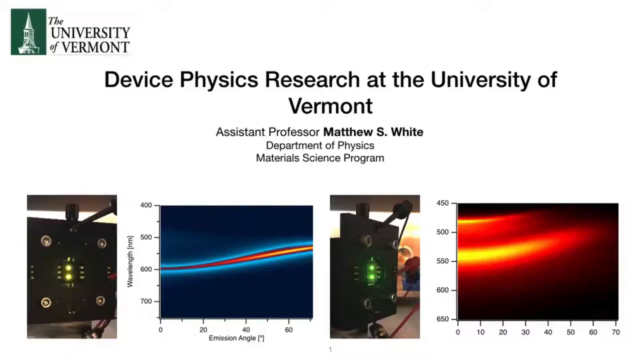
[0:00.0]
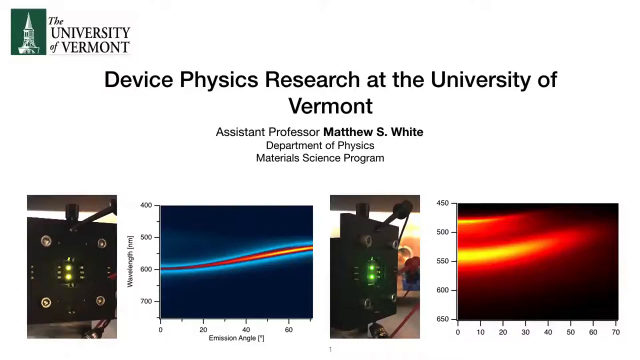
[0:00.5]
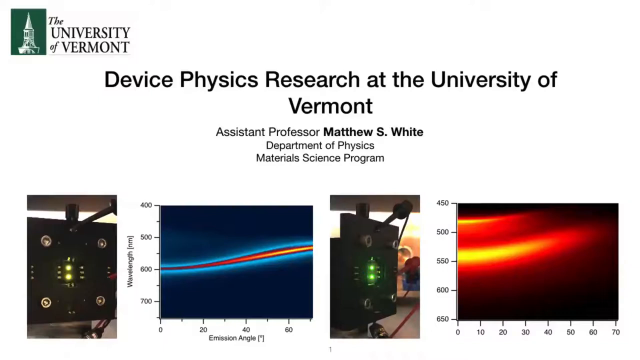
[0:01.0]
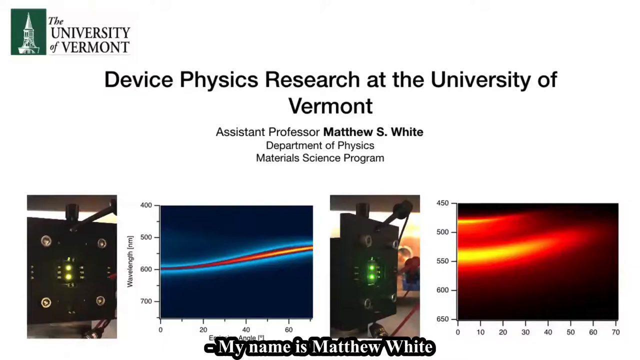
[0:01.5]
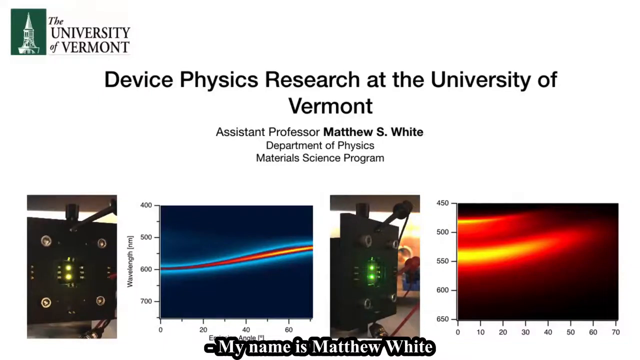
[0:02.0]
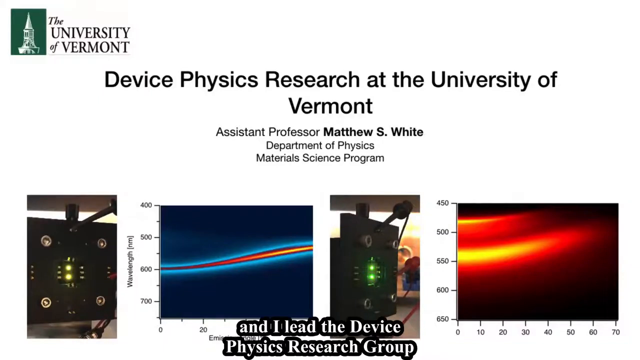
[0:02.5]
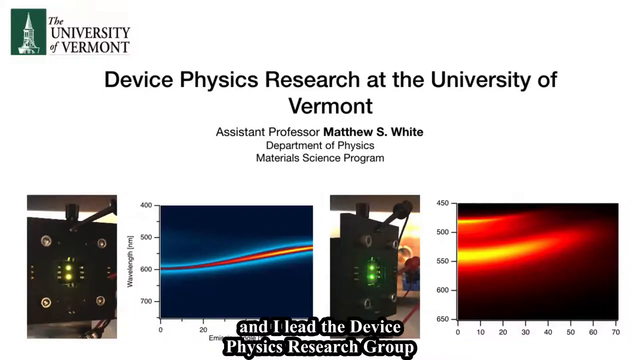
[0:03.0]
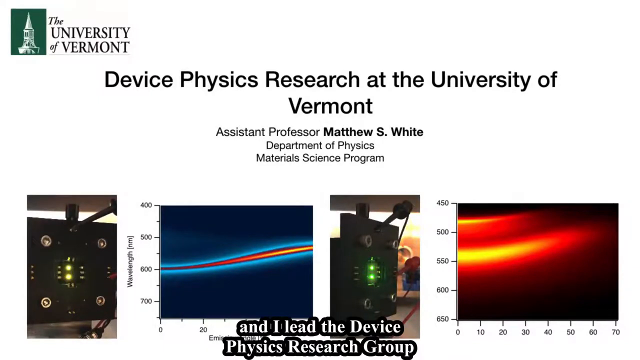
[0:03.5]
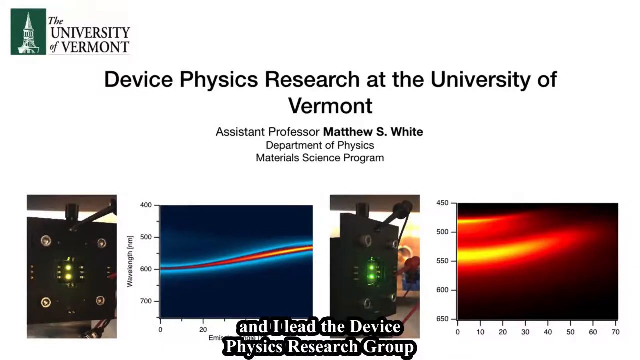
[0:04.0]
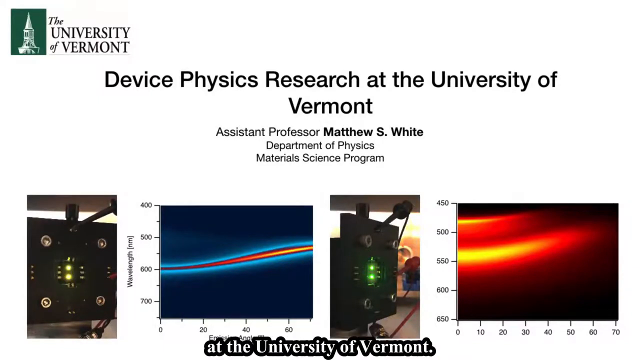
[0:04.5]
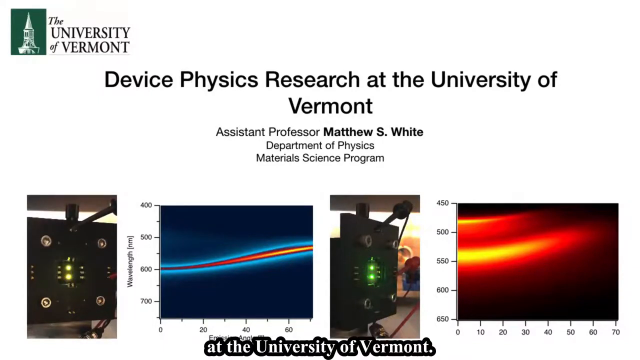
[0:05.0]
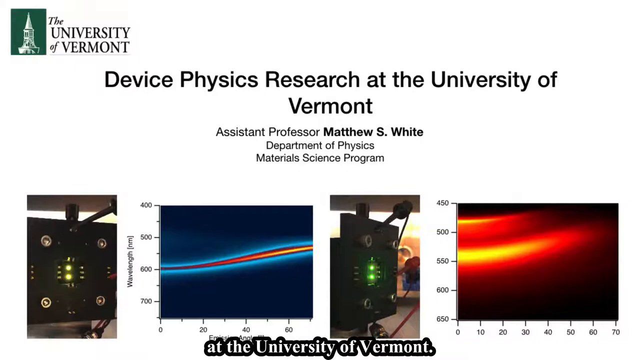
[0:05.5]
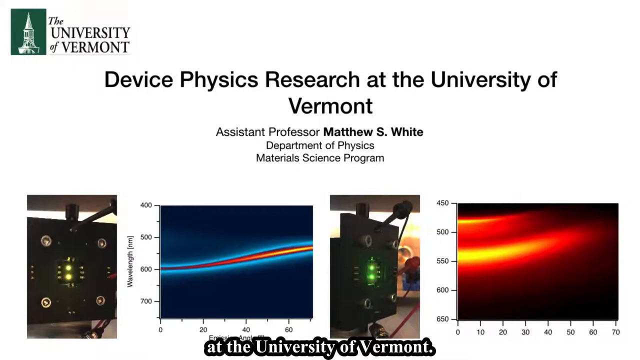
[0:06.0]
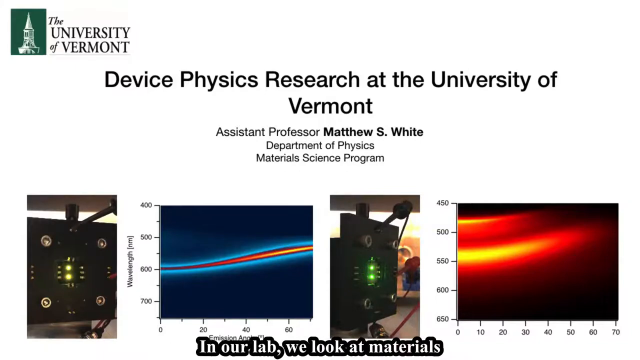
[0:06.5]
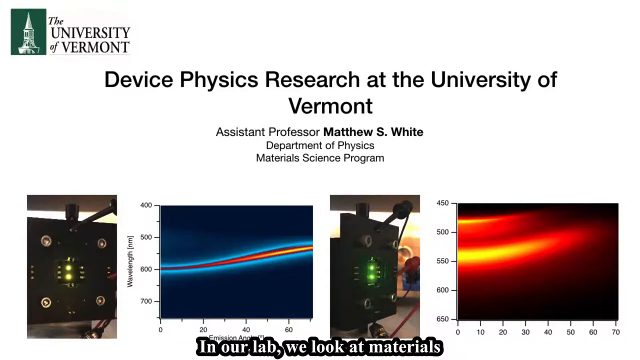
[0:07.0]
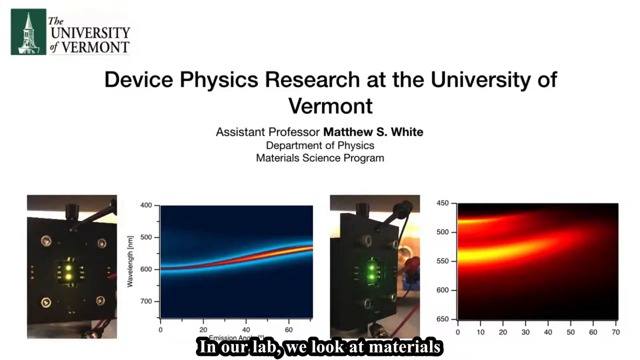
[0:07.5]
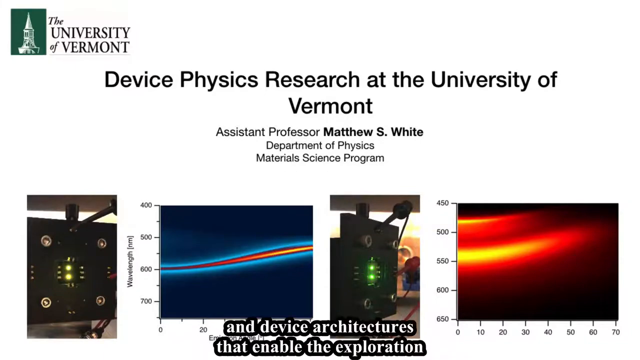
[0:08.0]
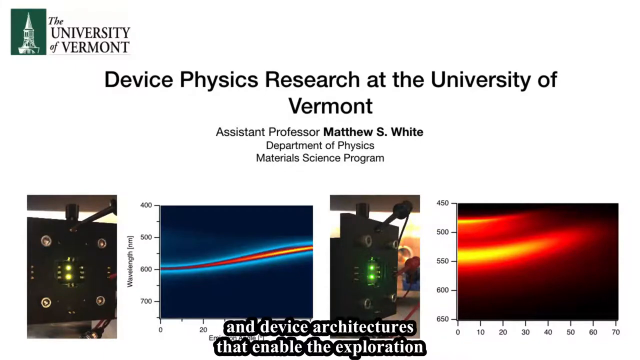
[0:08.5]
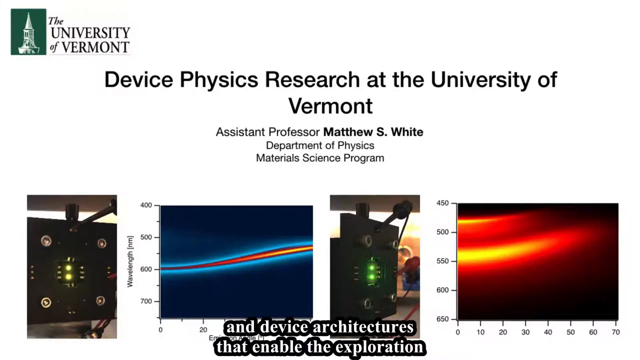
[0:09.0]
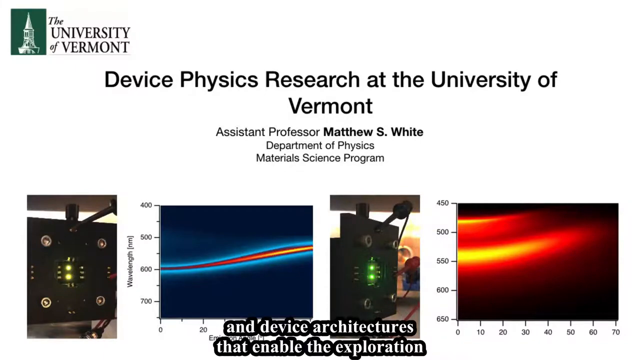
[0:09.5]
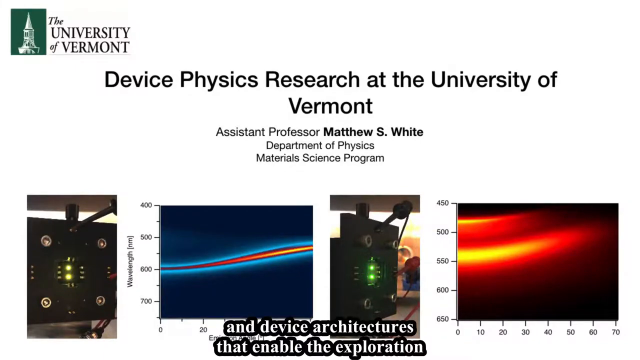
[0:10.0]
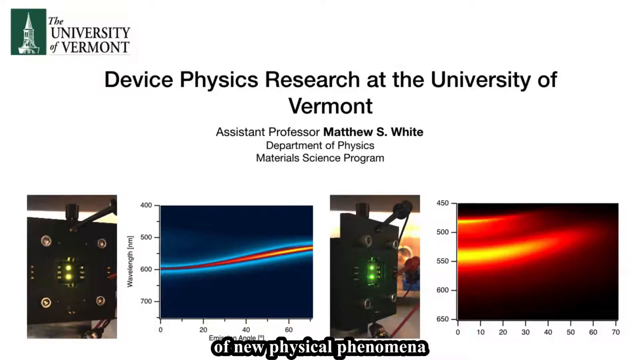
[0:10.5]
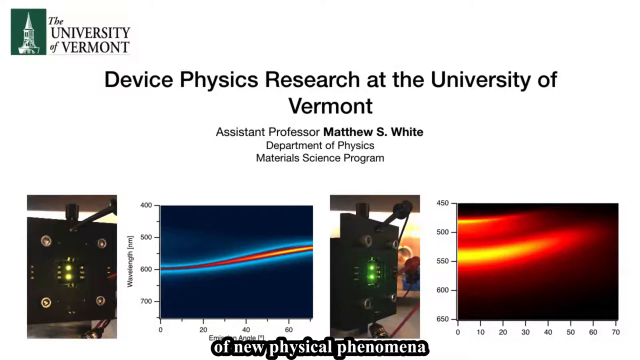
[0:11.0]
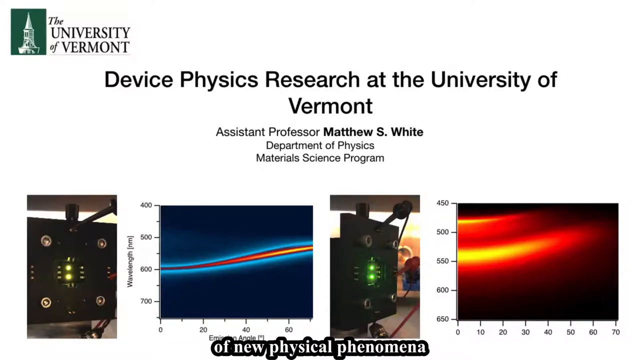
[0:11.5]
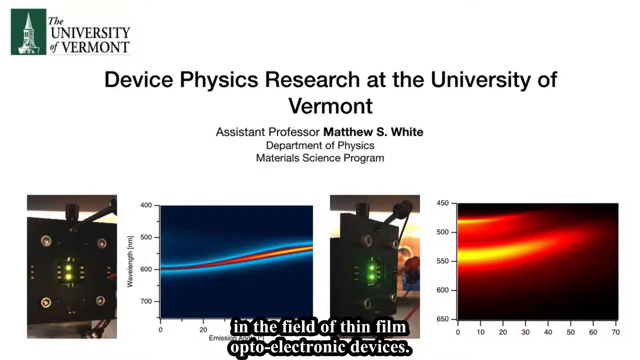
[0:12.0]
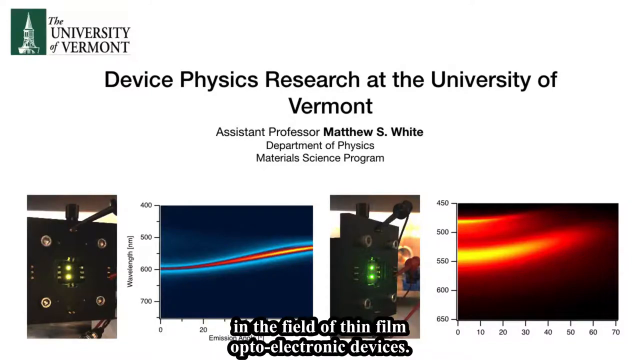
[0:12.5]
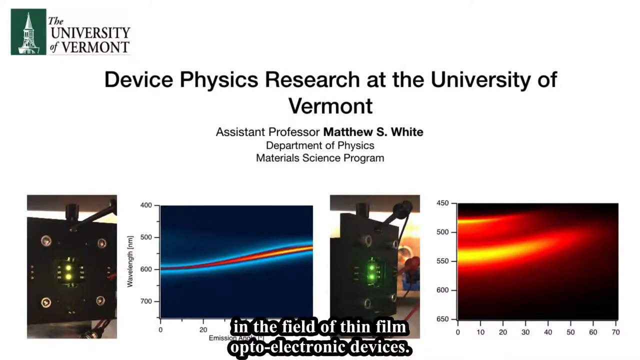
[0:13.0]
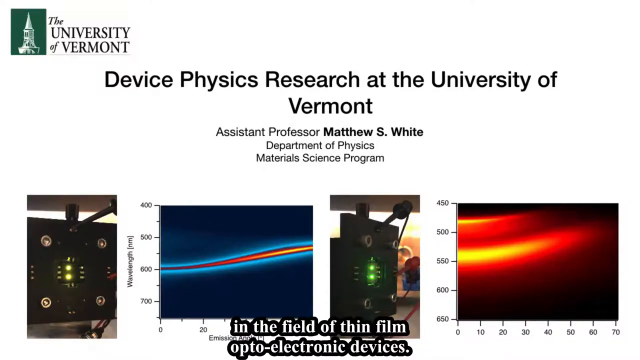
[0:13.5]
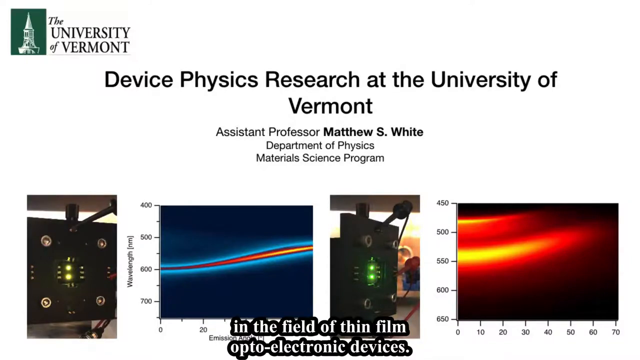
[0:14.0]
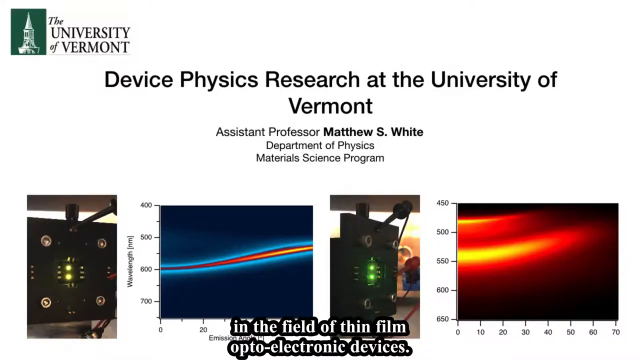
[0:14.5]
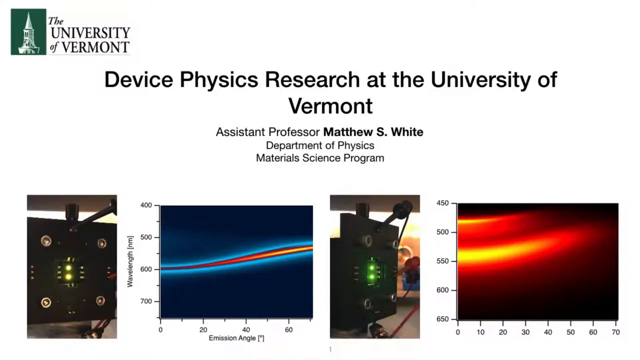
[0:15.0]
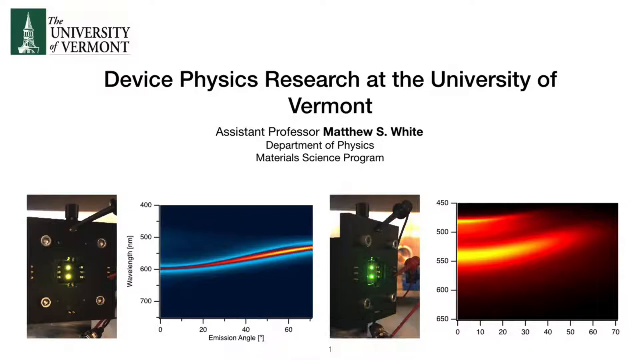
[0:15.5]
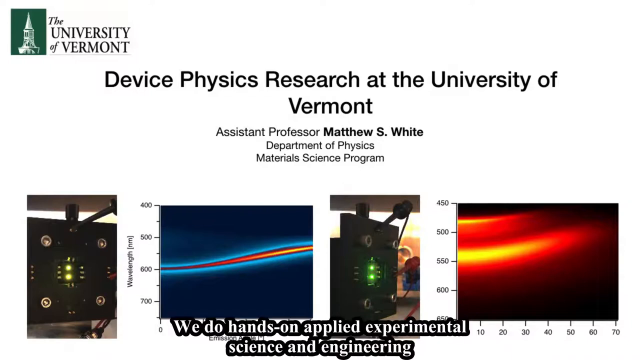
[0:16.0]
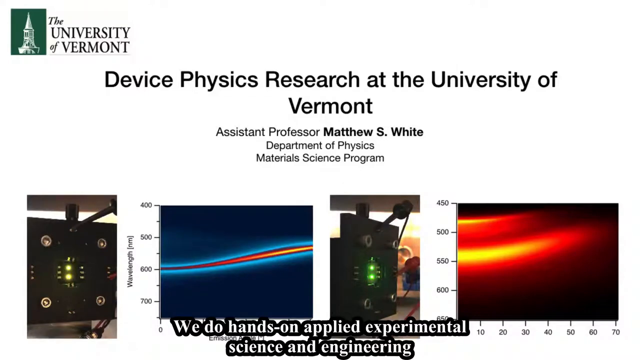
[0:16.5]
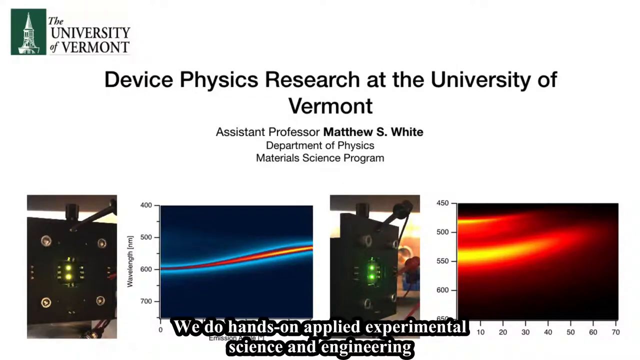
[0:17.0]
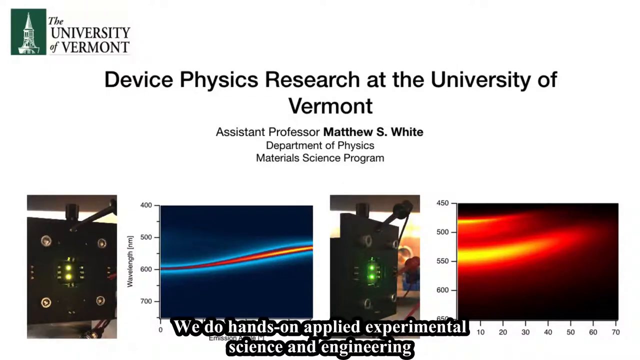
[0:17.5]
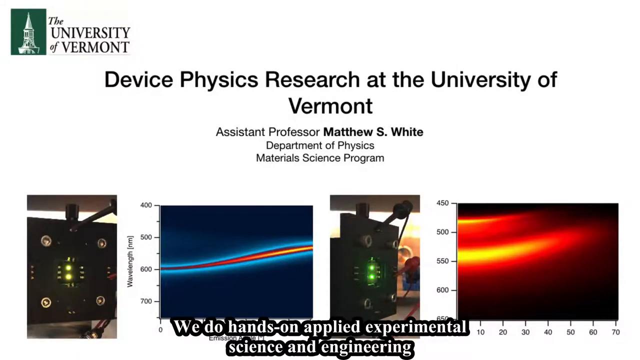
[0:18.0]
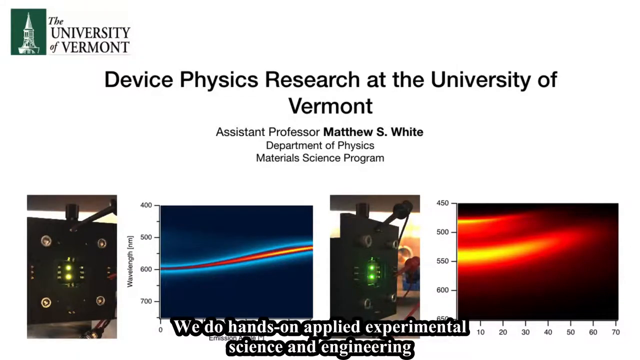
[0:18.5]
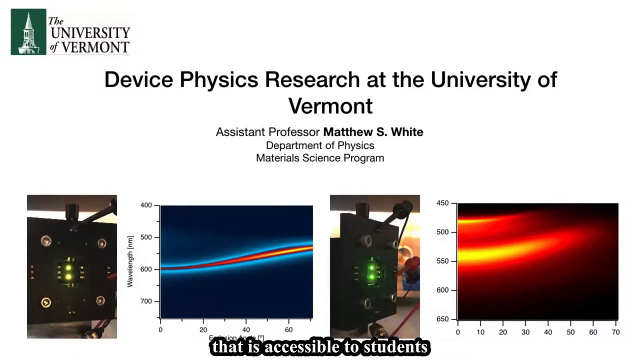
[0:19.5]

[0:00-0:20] The video appears to be a presentation or slideshow from the University of Vermont, titled "device physics research at the University of Vermont." The presenter is assistant professor Matthew S. White of the department of physics, in the materials science program. Four images appear on screen: one looks like fire, another looks like atoms and neutrons, a third is a graph with a blue background and a colorful line graph, and the fourth appears to be some sort of device lit up in green. Captioning at the bottom shows what he is saying; he begins by introducing himself, saying that in his lab they look at materials and device architectures that enable the exploration of phenomena.